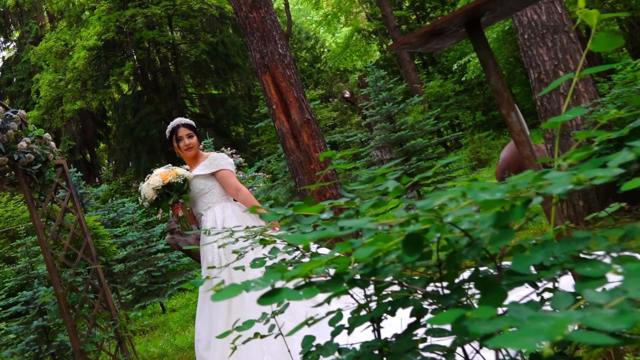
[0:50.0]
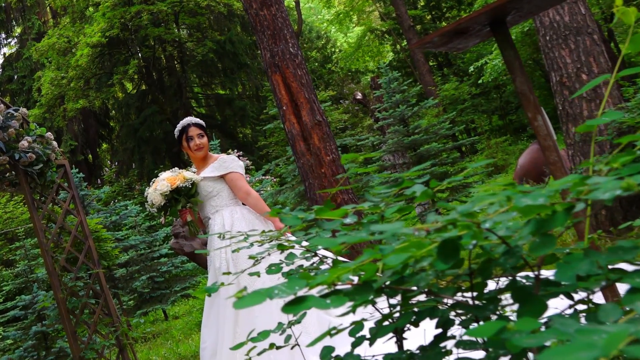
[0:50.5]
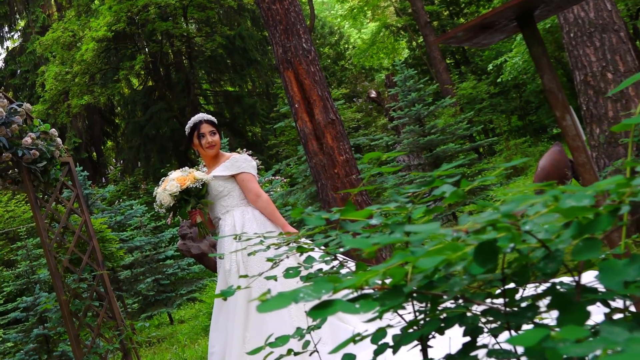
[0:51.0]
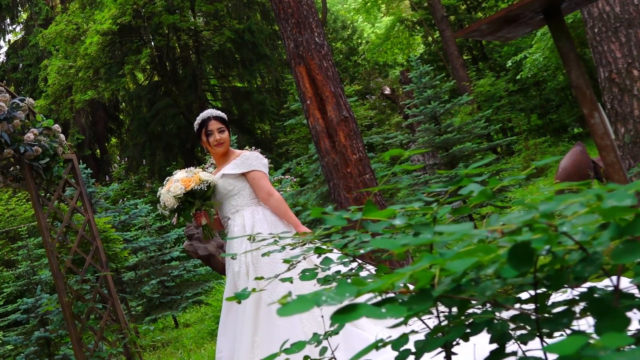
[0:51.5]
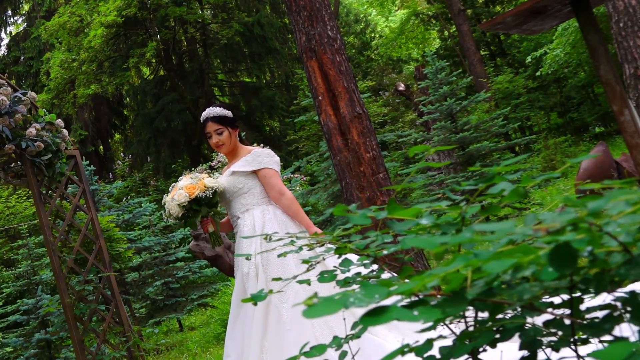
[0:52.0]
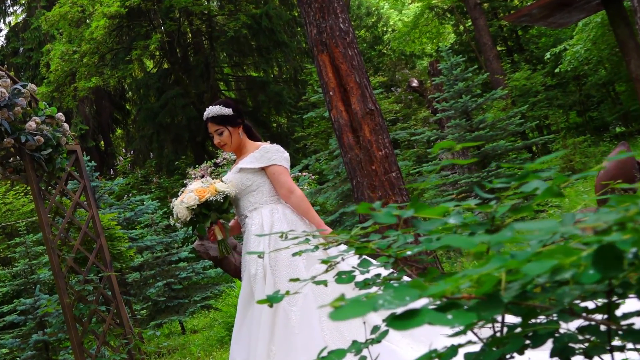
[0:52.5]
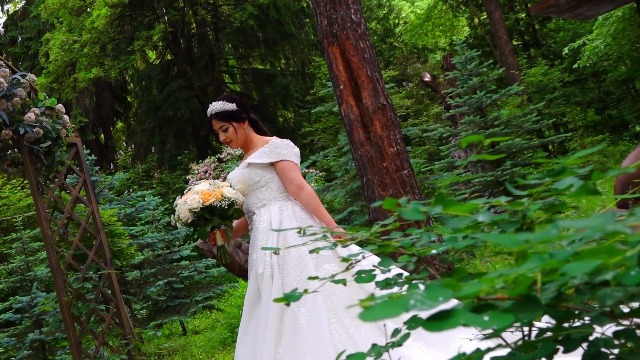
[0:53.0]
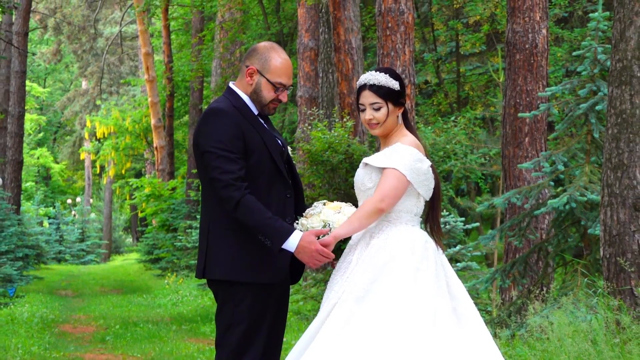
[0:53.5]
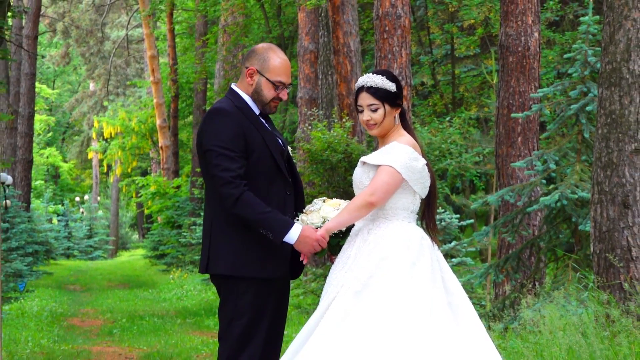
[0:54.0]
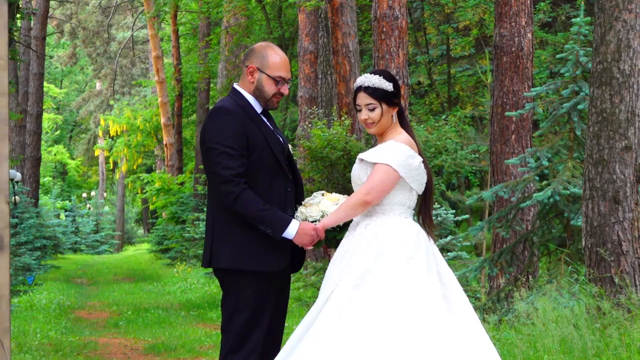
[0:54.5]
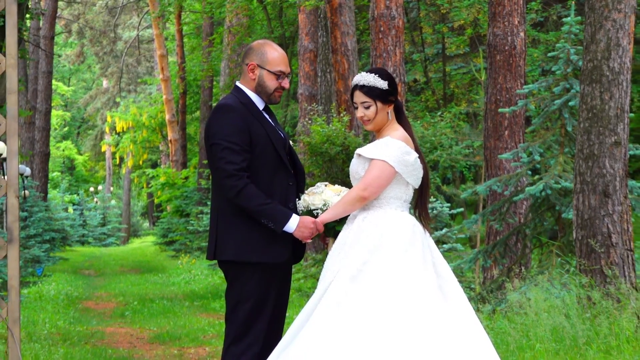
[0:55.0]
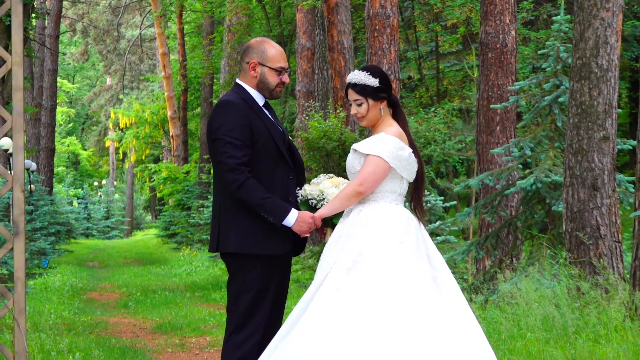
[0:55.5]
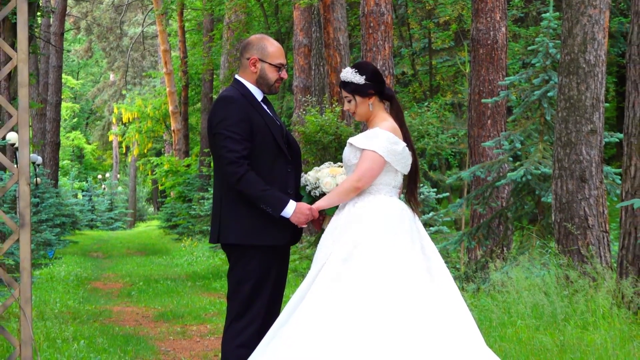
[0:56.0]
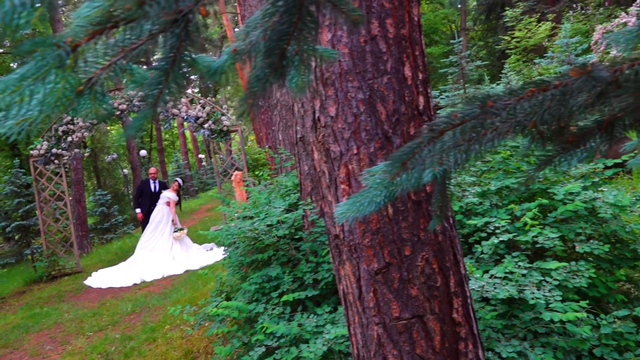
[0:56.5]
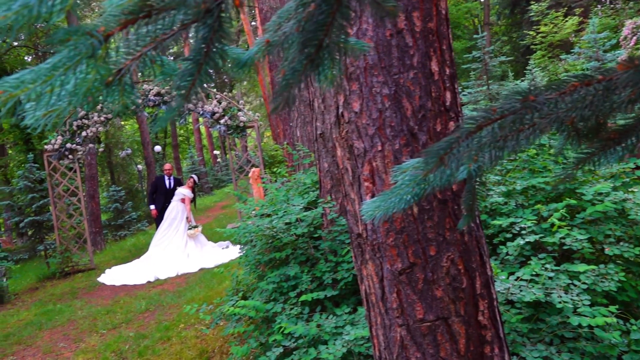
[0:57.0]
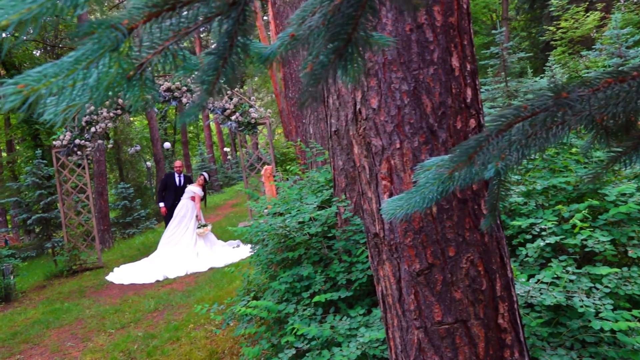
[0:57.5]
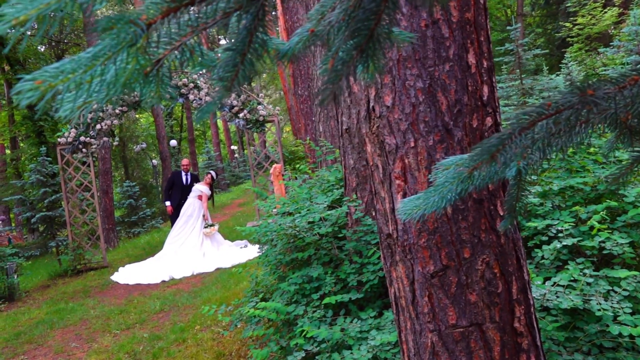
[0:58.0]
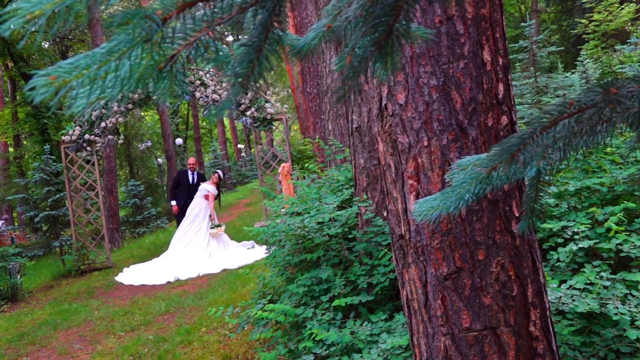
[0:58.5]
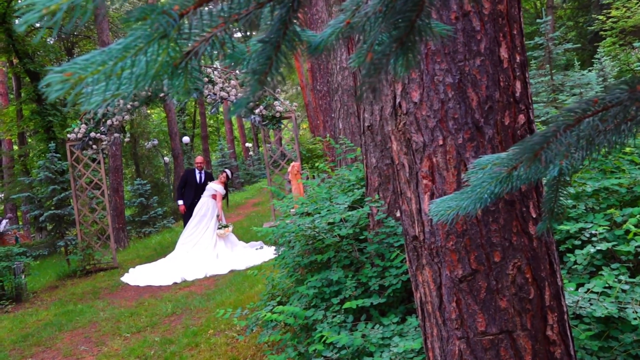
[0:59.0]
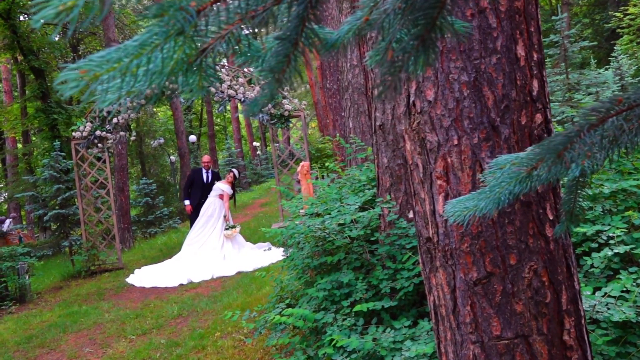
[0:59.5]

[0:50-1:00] The couple take pictures together after the wedding. The lady is holding a lot of flowers. The man comes, holds her hand, and they pose for pictures.